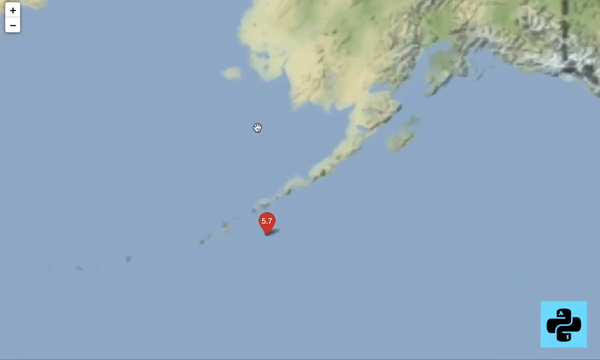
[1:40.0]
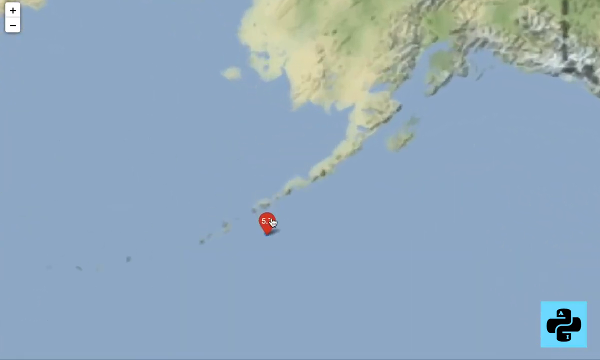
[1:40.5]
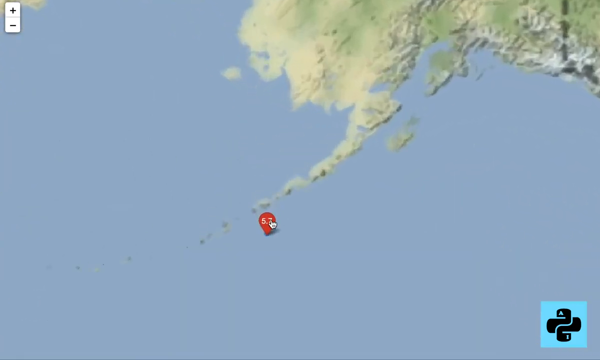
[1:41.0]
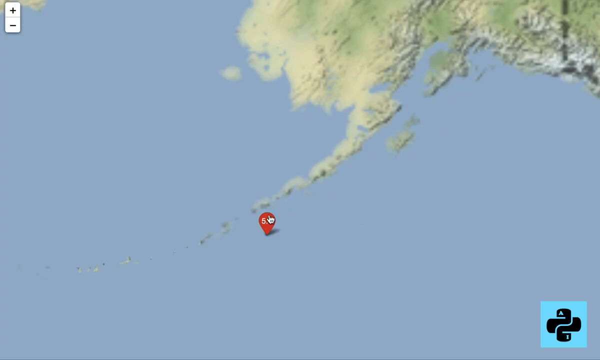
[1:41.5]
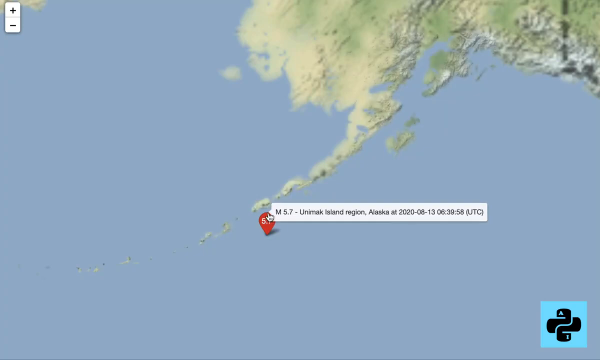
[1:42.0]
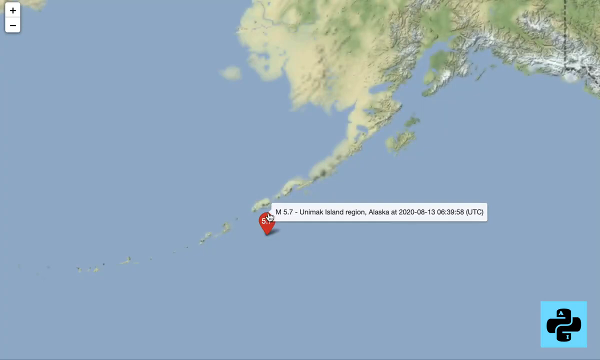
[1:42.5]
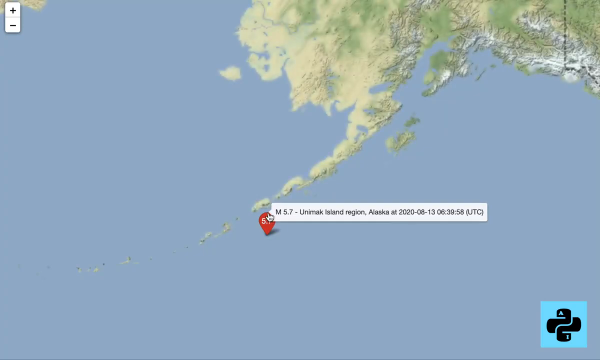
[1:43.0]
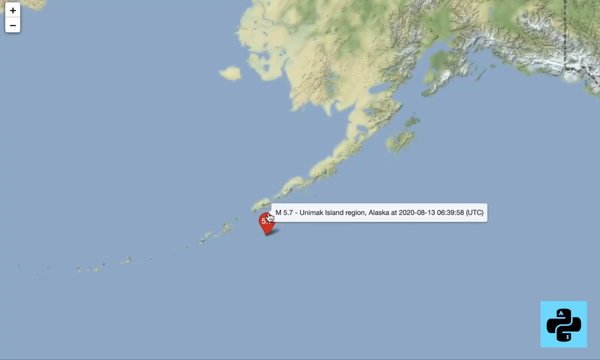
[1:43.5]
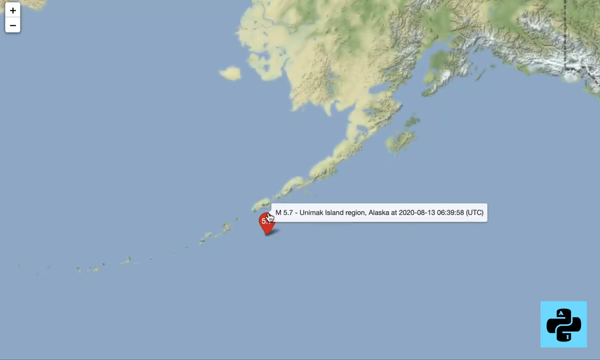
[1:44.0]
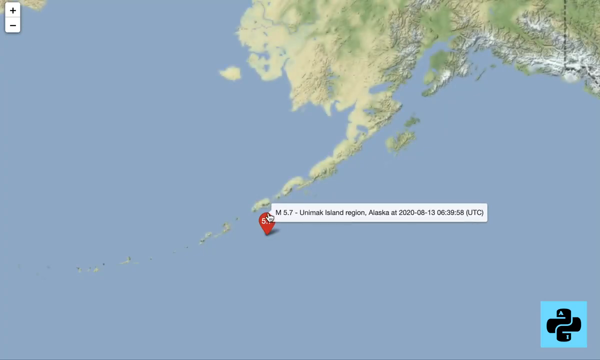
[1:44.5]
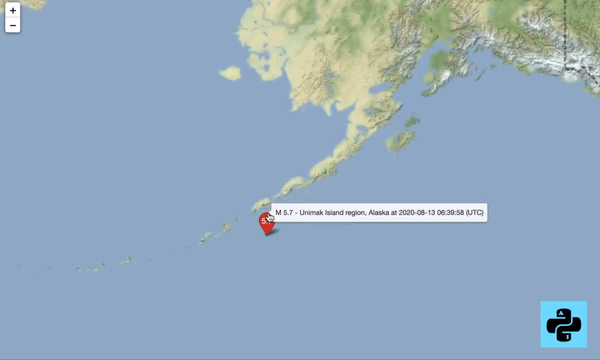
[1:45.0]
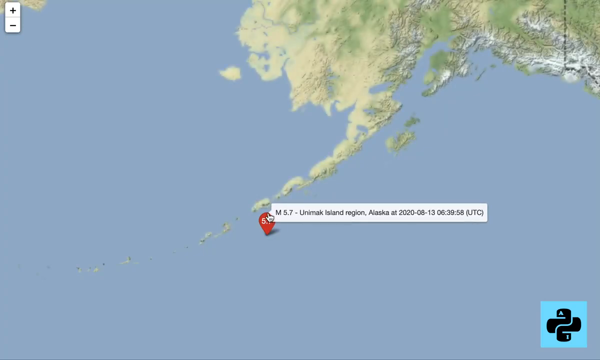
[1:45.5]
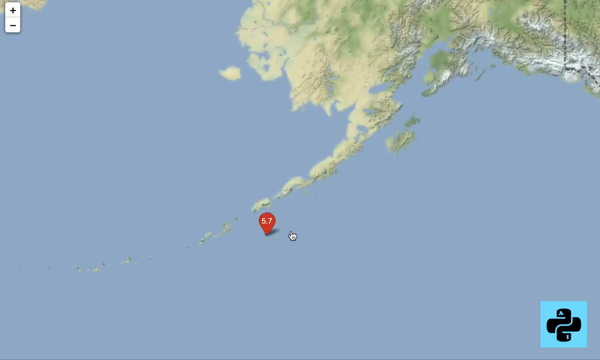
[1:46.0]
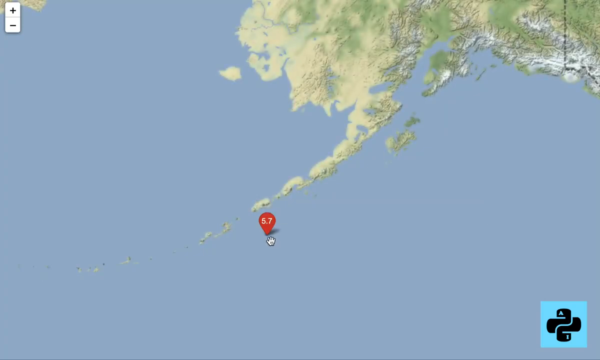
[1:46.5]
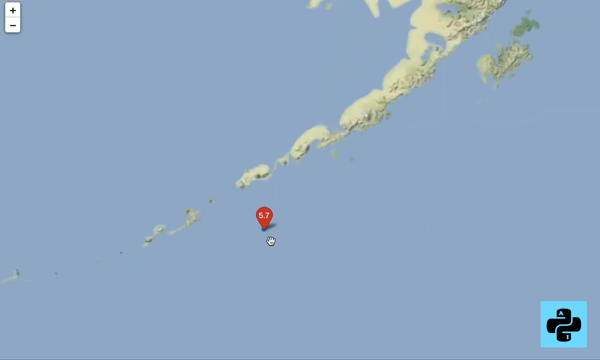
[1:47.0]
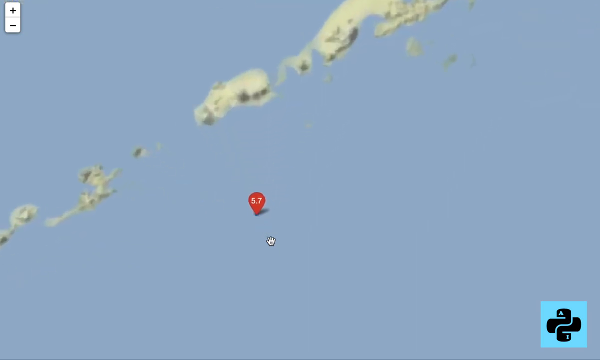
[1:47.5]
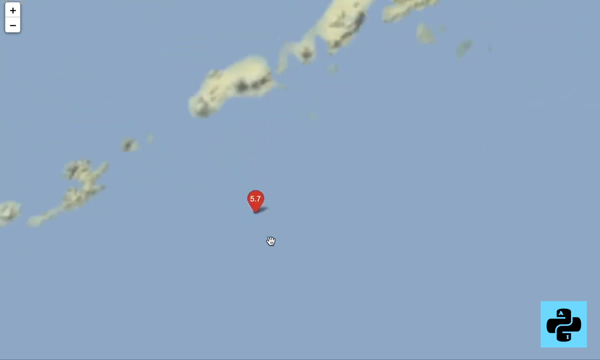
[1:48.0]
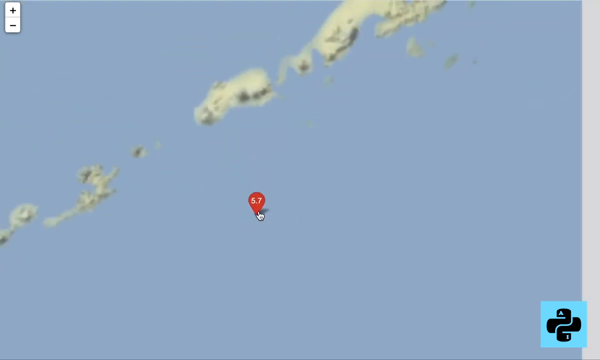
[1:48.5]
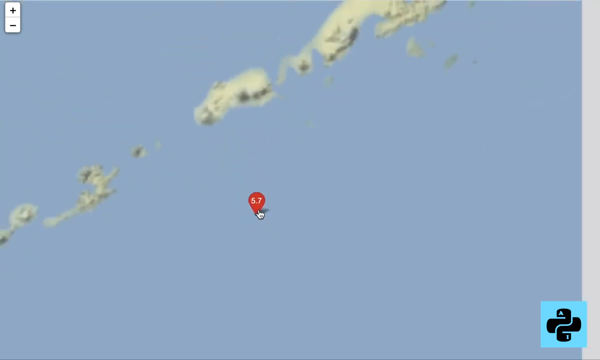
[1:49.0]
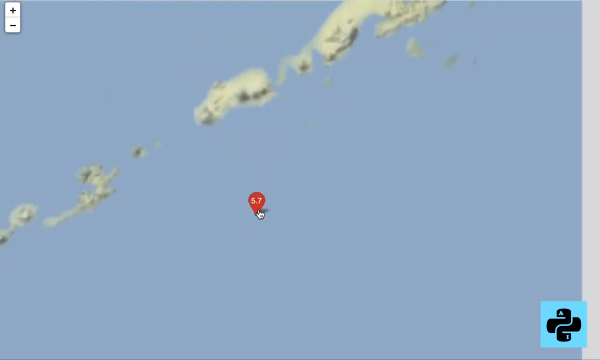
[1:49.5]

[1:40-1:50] A red marker on a digital map is placed just off the southern coast of Alaska, by the part that kind of extends out into the ocean, and shows the number 5.7. A little hand icon hovers over the red marker, and details appear: "M5.7", "Unamoc Island Region, Alaska" and "2020-08-13-0639-58UTC", the date and time of the earthquake. The little hand pulls in closer on the 5.7 marker, and a couple of small islands extending off the southern coast of Alaska become visible.